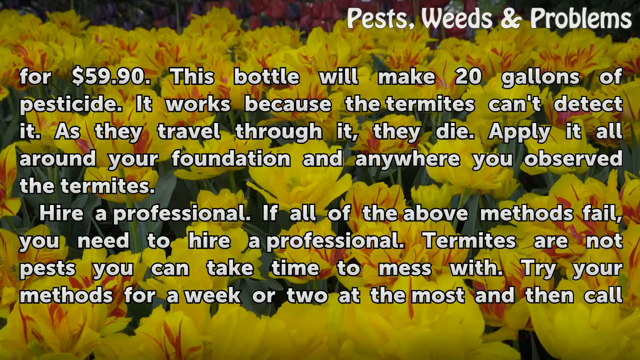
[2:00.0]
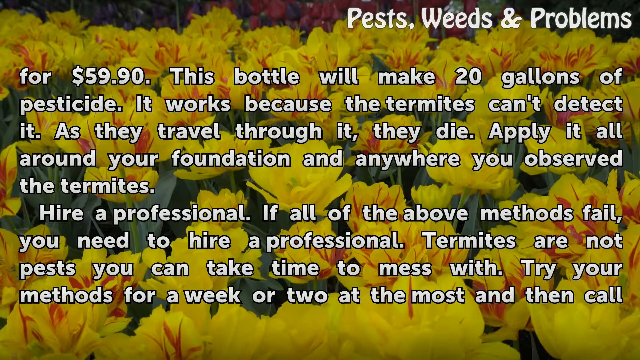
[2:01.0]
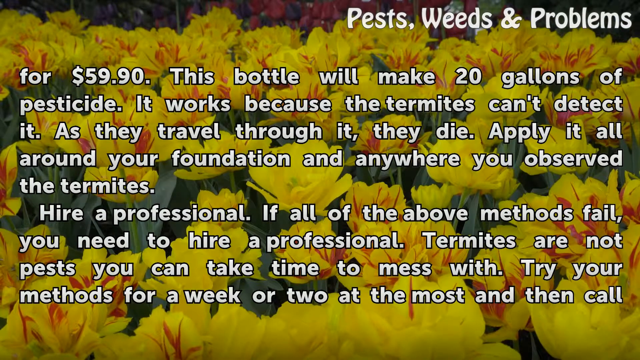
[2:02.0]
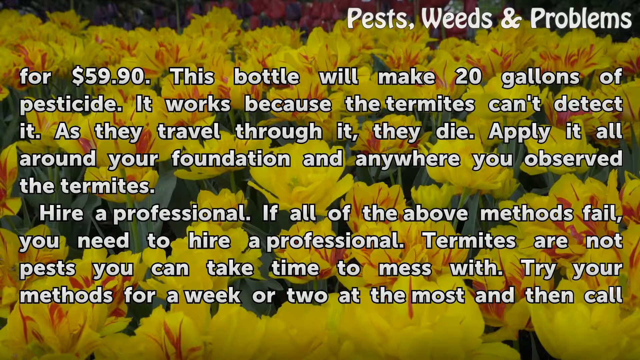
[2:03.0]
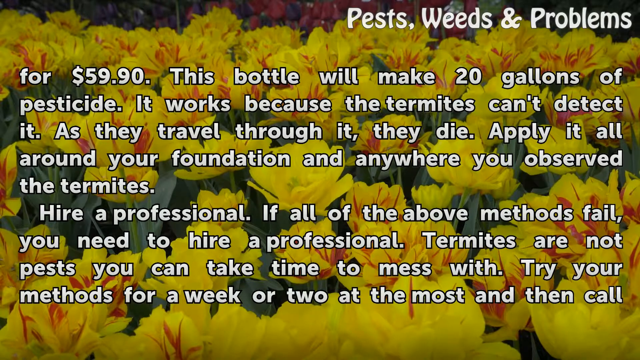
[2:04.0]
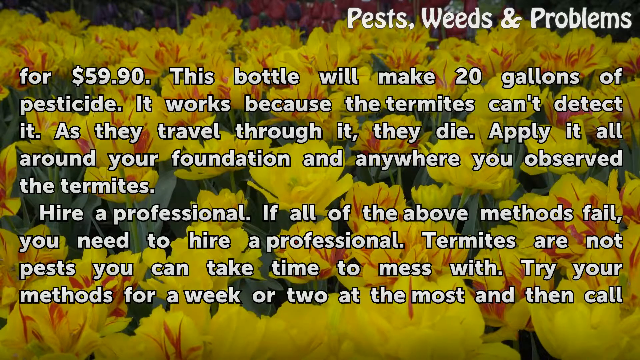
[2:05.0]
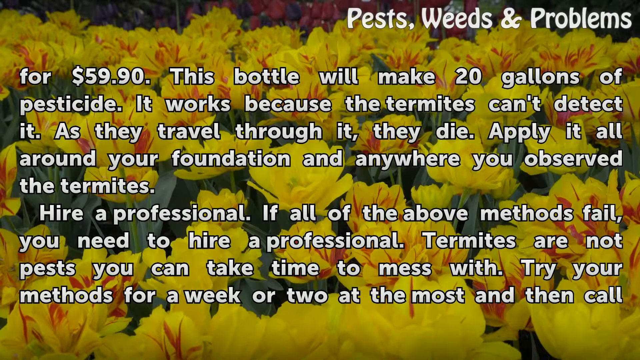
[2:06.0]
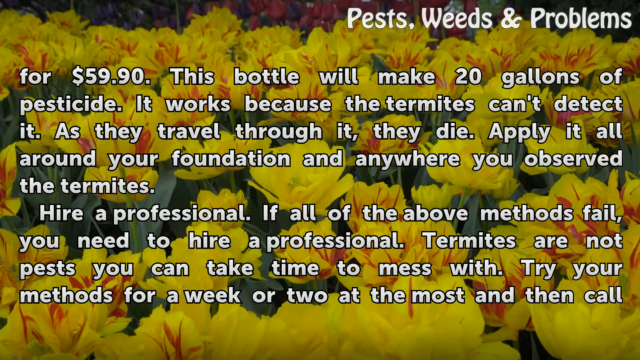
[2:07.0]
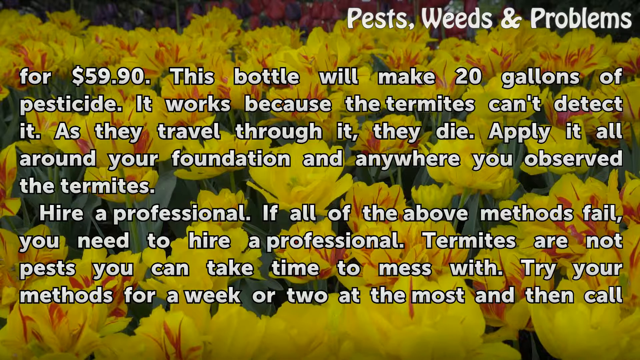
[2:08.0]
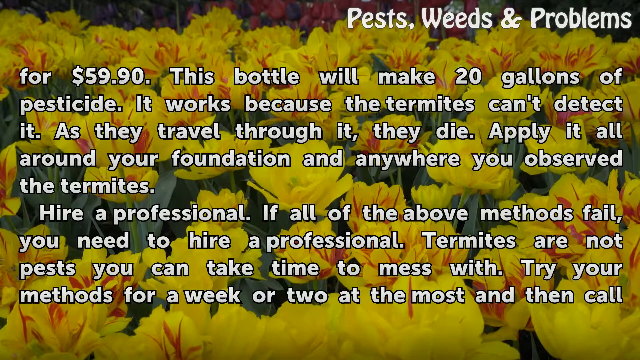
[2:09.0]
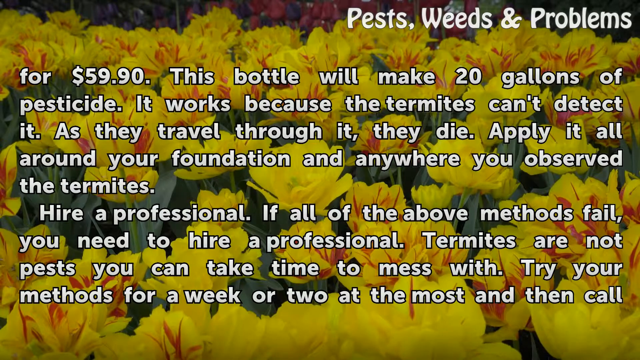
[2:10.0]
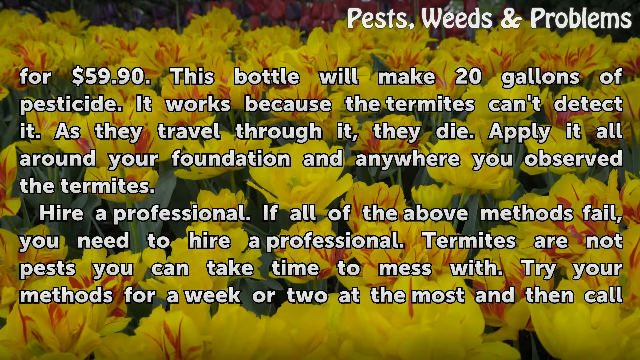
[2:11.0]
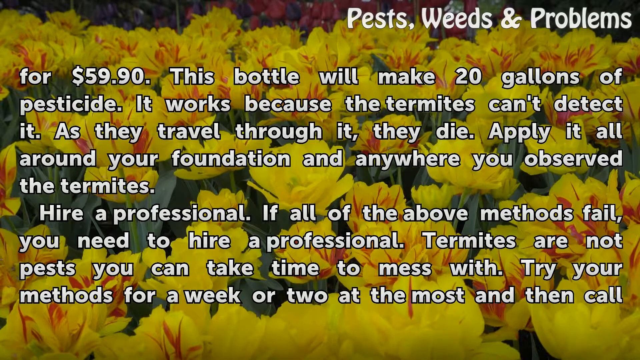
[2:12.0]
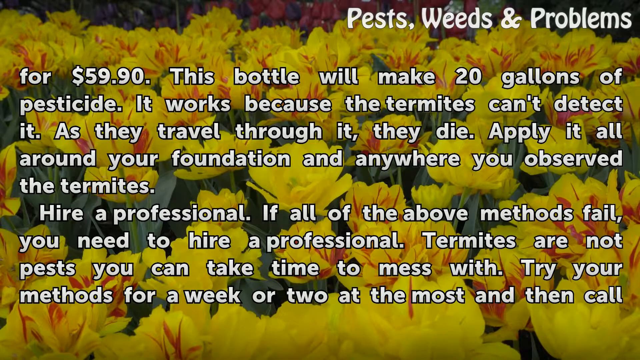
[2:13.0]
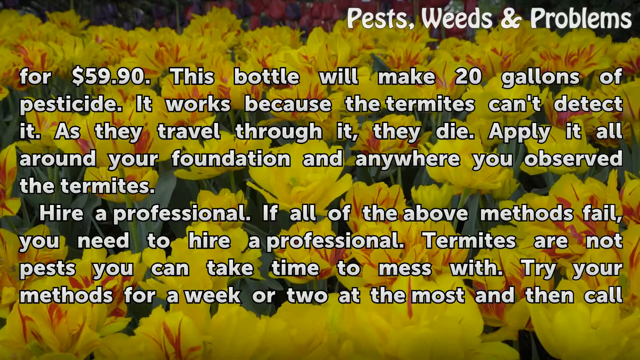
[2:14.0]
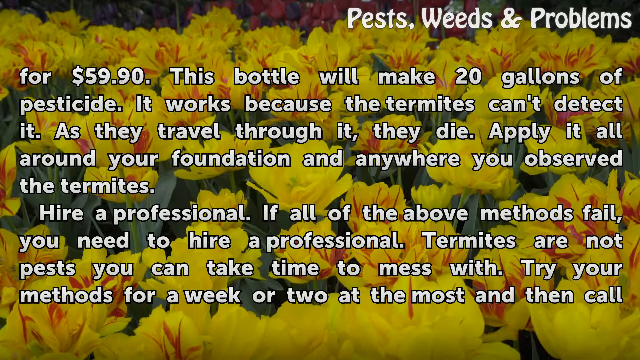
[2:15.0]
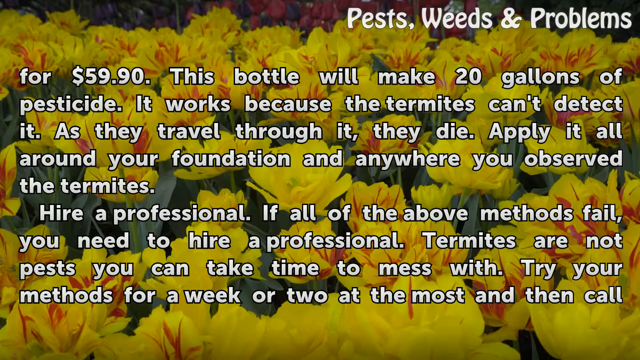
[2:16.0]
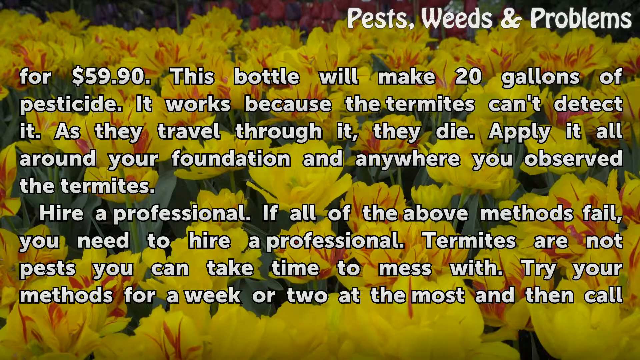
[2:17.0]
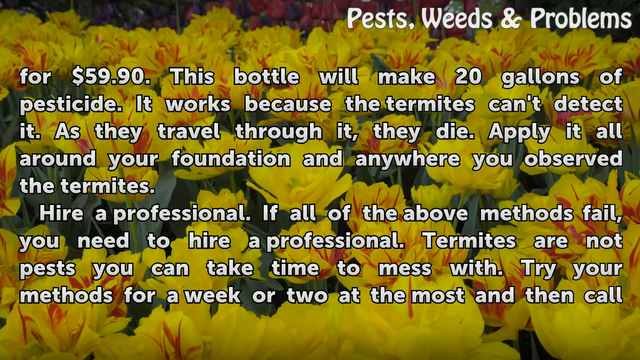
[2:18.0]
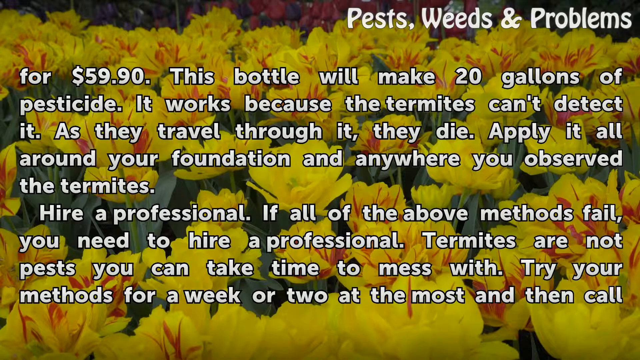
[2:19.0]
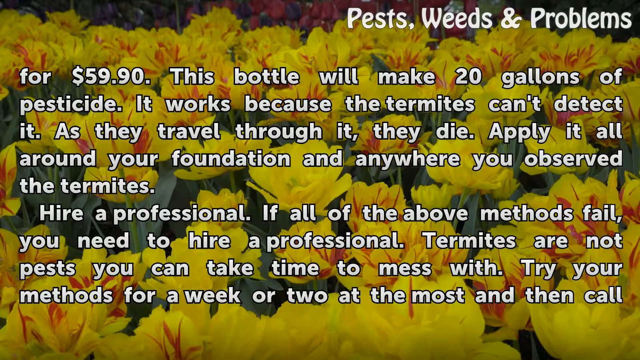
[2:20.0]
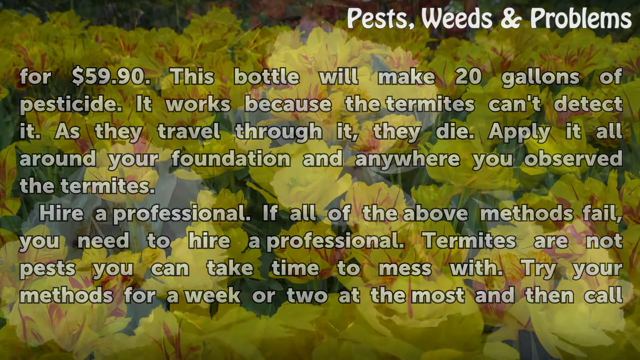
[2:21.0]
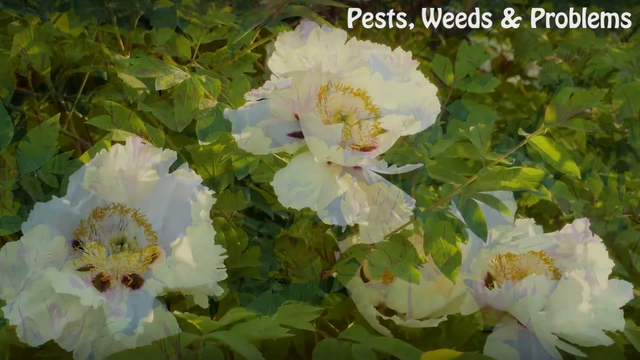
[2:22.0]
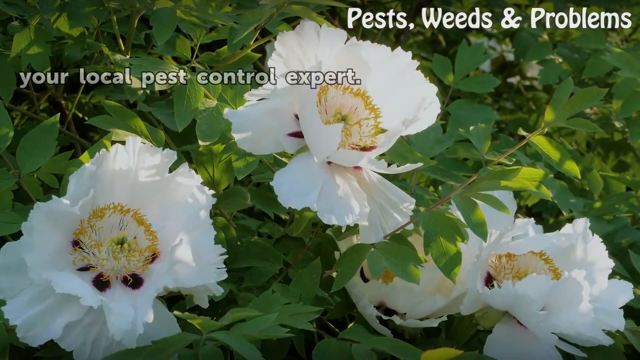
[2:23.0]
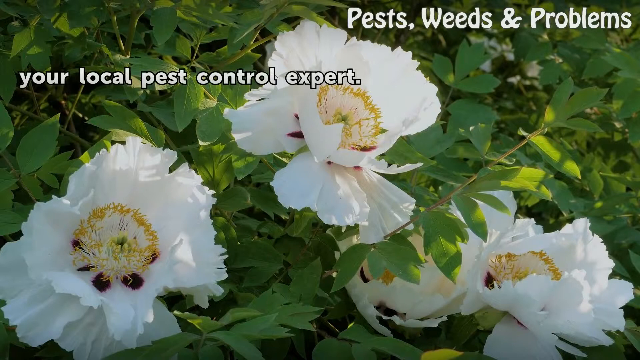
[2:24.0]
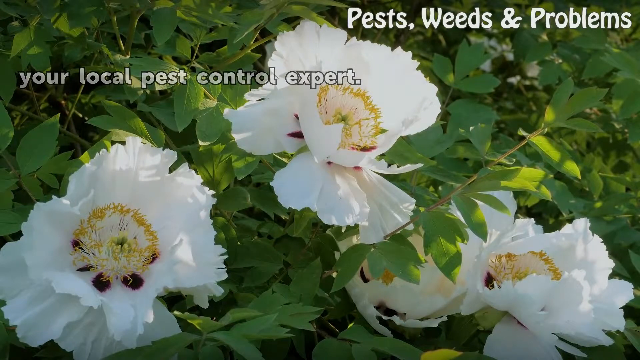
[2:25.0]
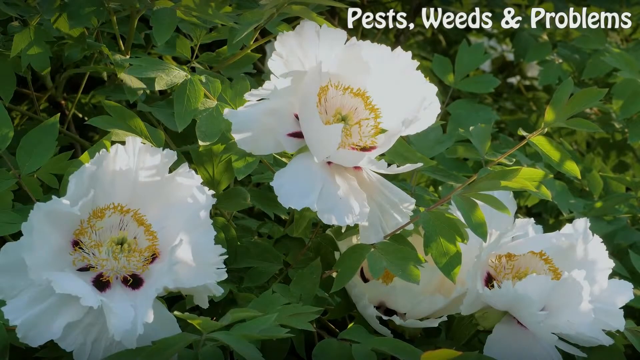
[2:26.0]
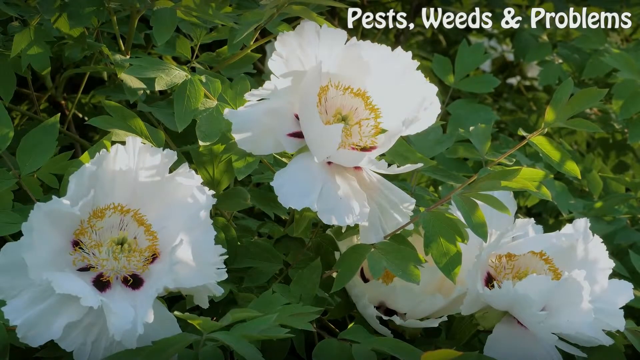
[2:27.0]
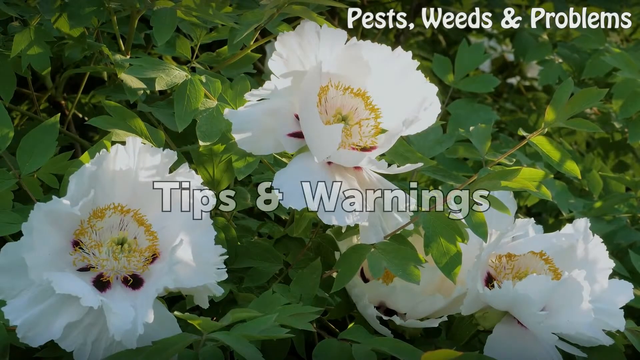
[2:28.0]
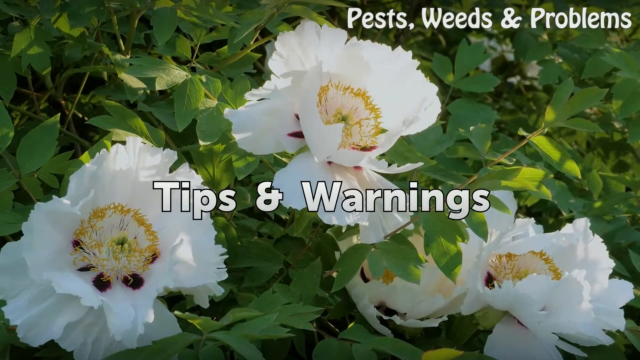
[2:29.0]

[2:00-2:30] The text stays on the screen for quite a long time. Eventually it fades away and the background shot changes as well, now showing a rosebush with simple, white peony-style roses. Sunlight falls on the roses, and it is difficult to tell whether this is video footage or a photograph because nothing in the frame is moving. A new line of text appears that reads "your local pest control expert." After a couple of seconds it fades away, and a caption fades up in the middle of the frame in a much bigger font size than the earlier text, reading "tips and warnings." It is written in a simple white font over the footage of the rosebush.